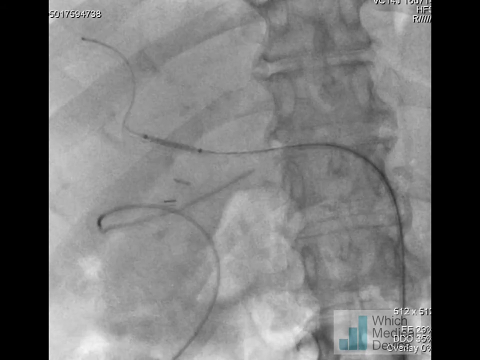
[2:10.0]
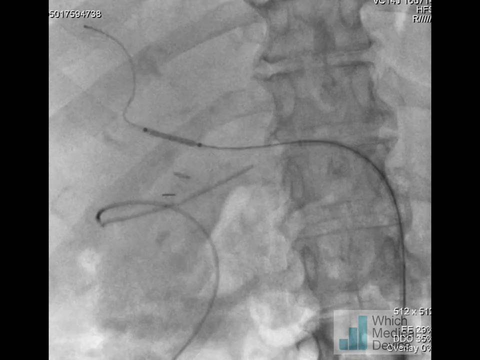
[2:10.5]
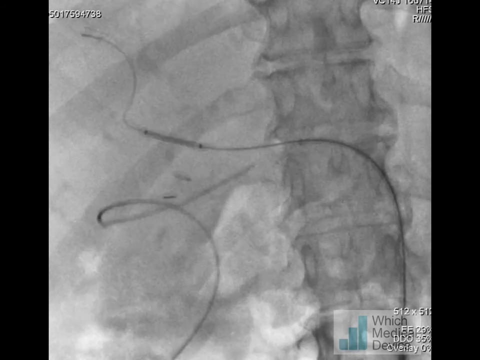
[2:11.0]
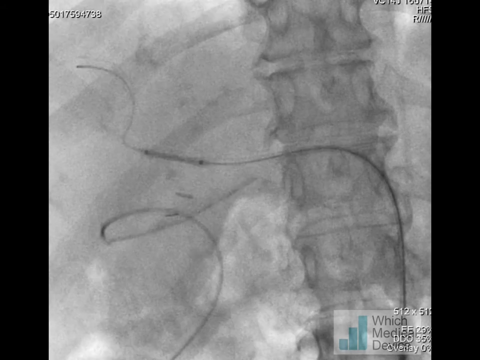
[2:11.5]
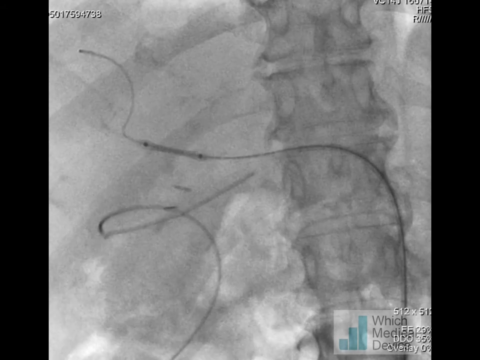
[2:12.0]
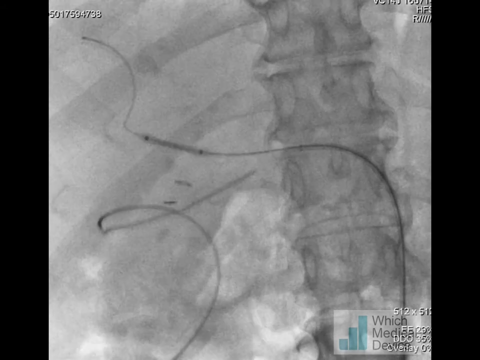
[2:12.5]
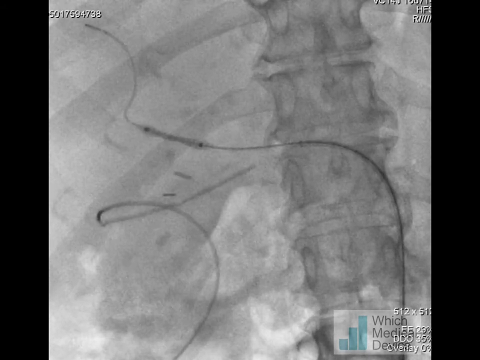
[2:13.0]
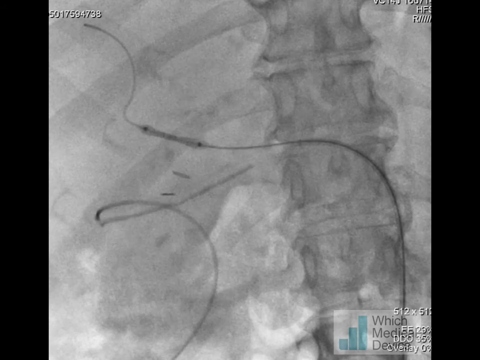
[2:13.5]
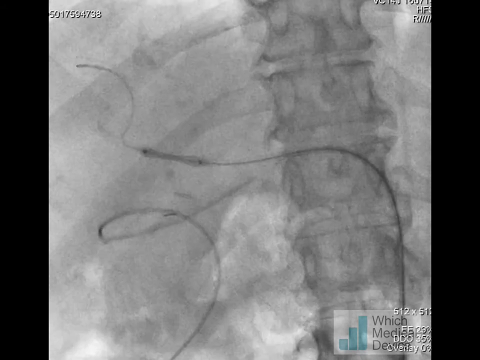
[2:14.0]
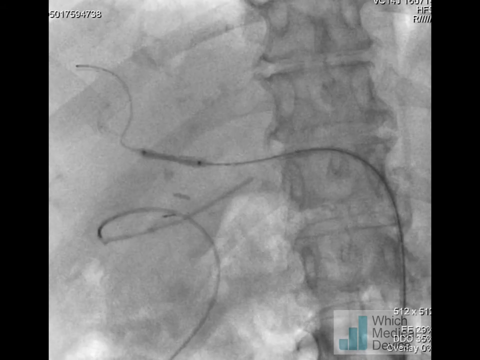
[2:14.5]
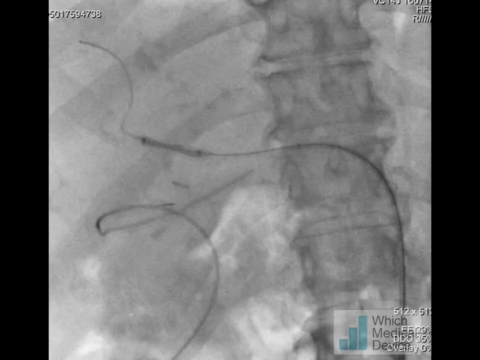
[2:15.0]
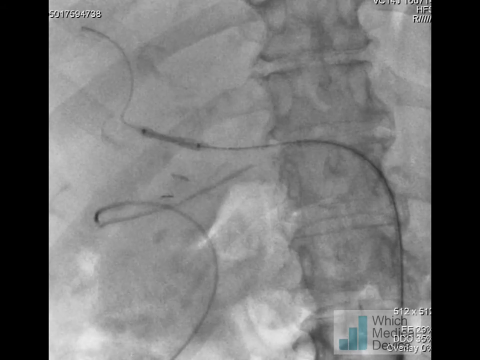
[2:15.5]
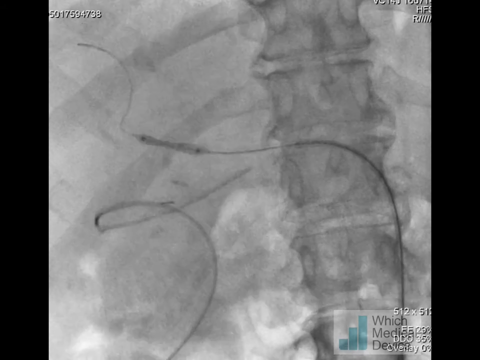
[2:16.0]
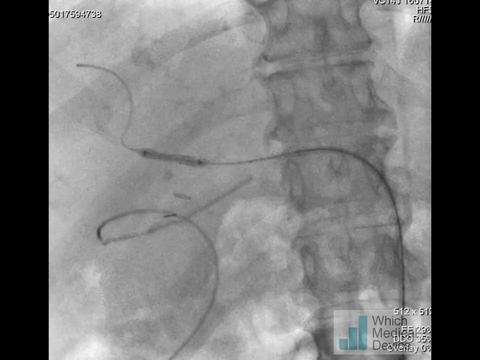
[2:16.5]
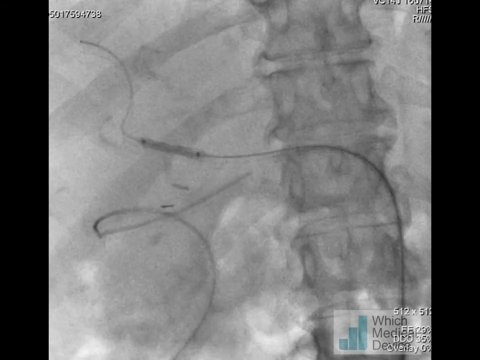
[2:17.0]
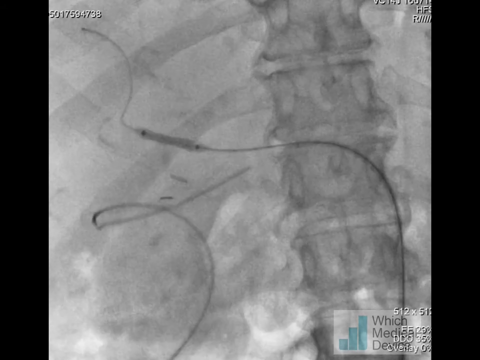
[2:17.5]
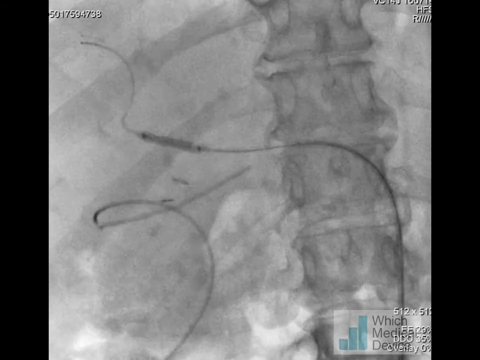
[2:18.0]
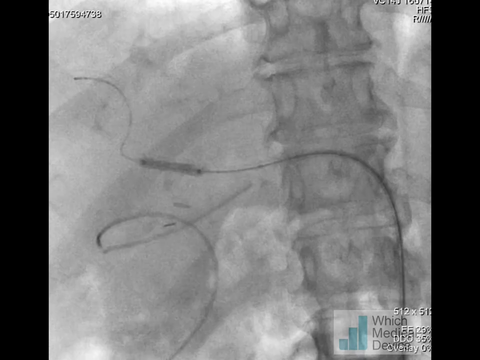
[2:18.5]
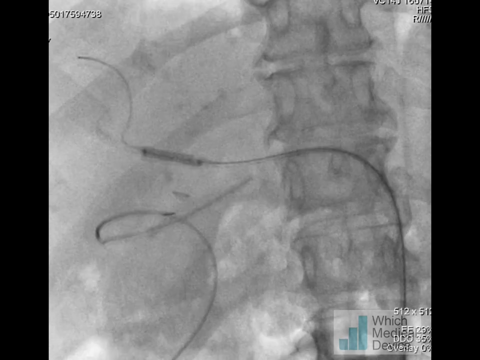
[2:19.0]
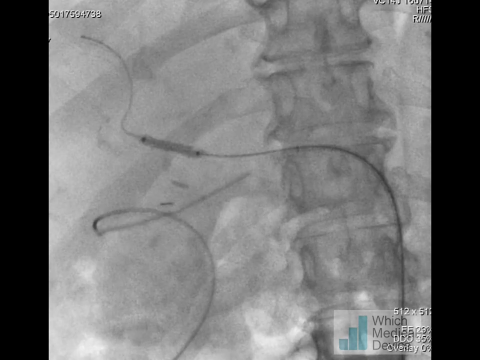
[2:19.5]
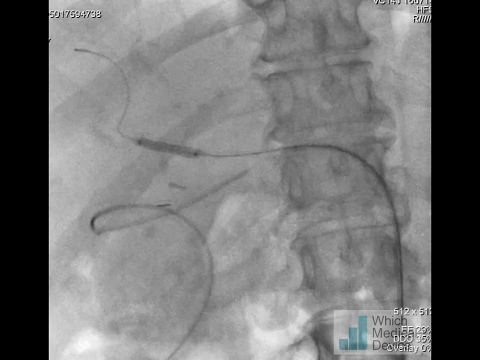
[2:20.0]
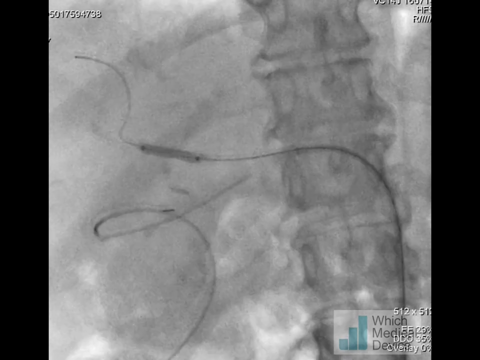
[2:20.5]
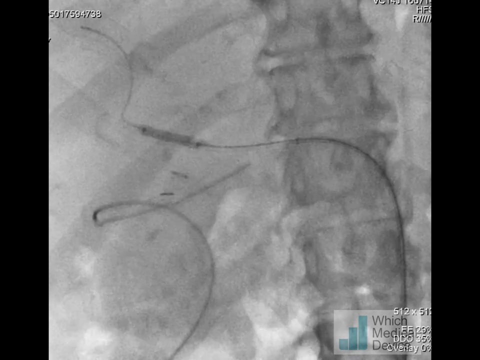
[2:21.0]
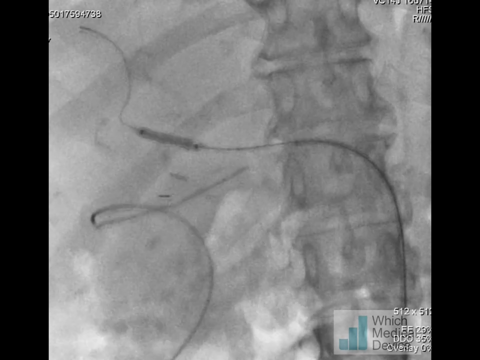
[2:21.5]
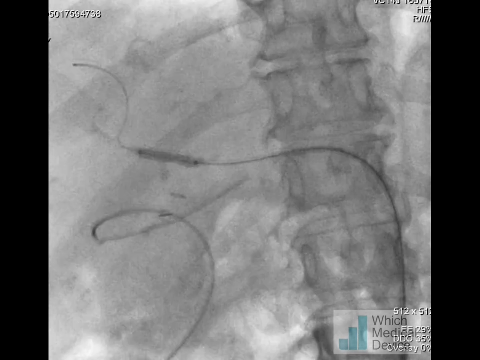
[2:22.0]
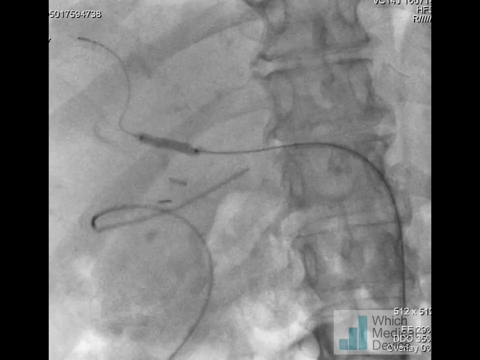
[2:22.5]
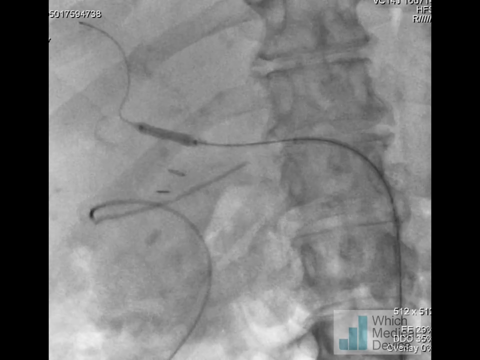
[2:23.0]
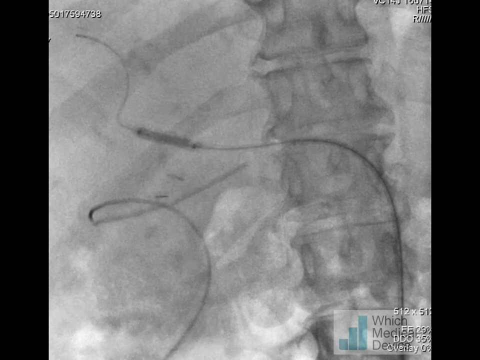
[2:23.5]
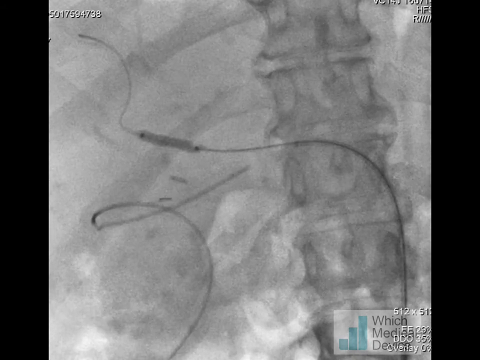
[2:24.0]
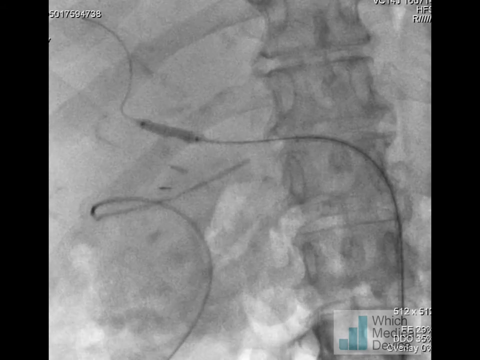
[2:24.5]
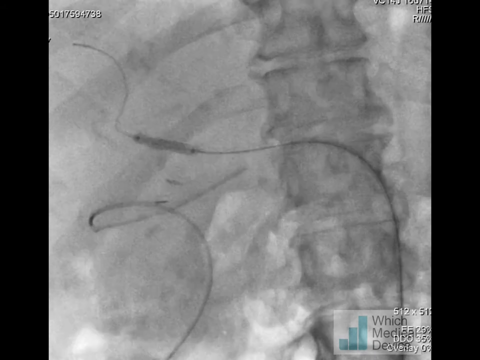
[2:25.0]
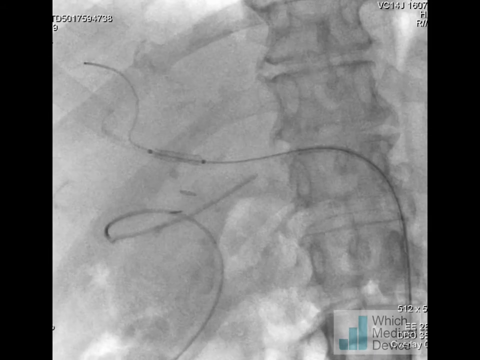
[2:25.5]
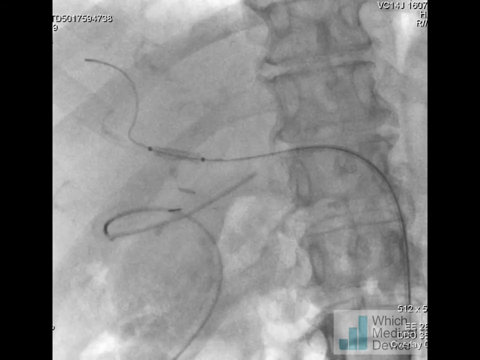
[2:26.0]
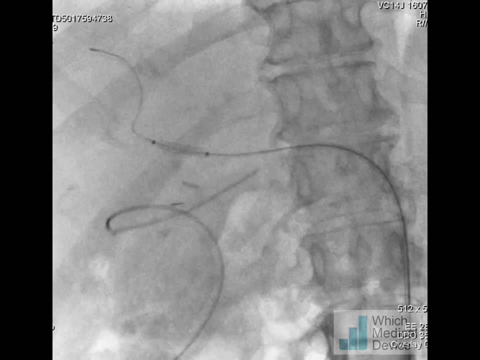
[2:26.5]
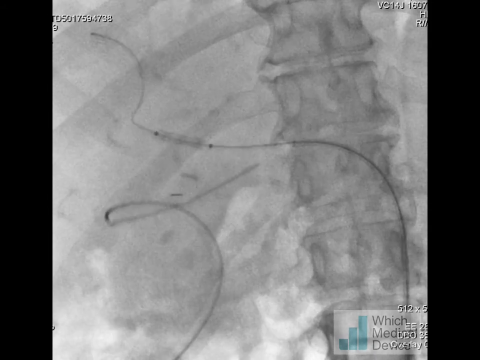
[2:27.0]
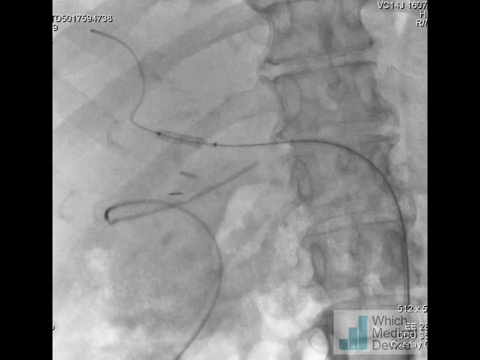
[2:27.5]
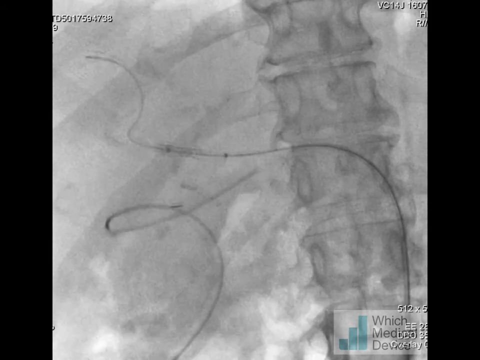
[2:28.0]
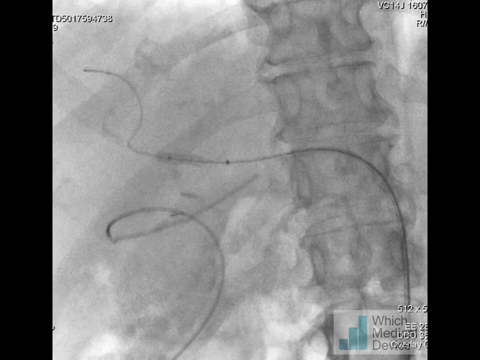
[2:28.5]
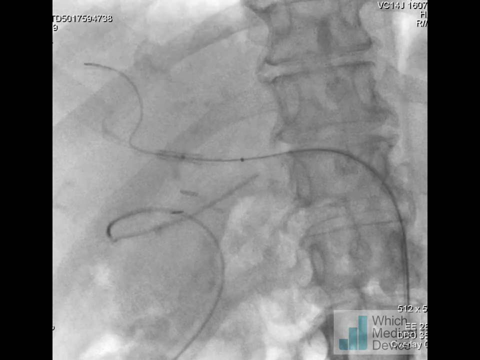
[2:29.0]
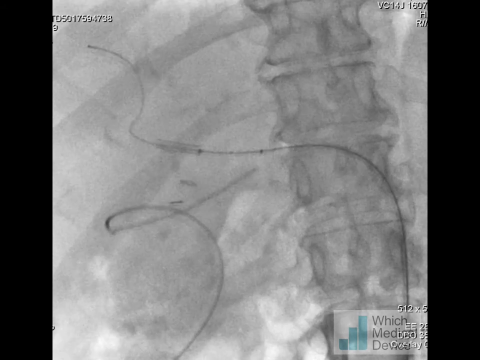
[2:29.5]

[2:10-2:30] A procedure is being done in which a long string near someone's spine moves up and down, possibly with the person's breathing, rising and then moving back down. A few dots inside the string area are being moved. The main string starts in the lower right corner, goes up a few inches, curves to the left, and runs horizontally until it gets close to the left side of the frame. It then curves upward, this time to the right, and then curves up like a backwards letter C heading toward the left. In the middle, slightly toward the left, are two black dots with a slightly darker connection between them in the string area.